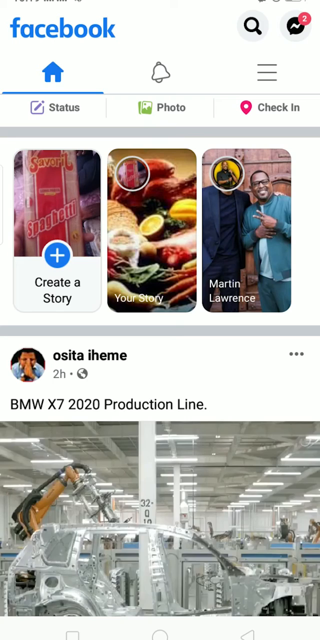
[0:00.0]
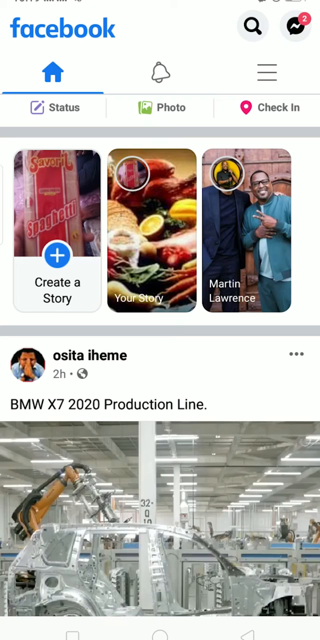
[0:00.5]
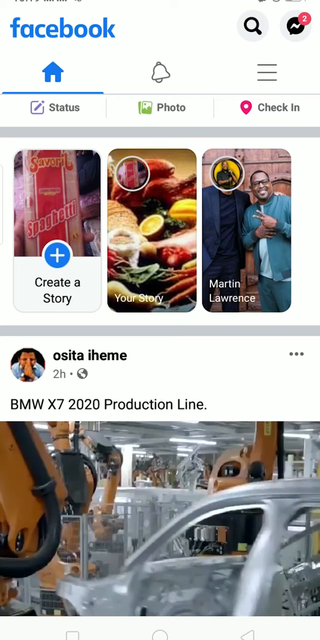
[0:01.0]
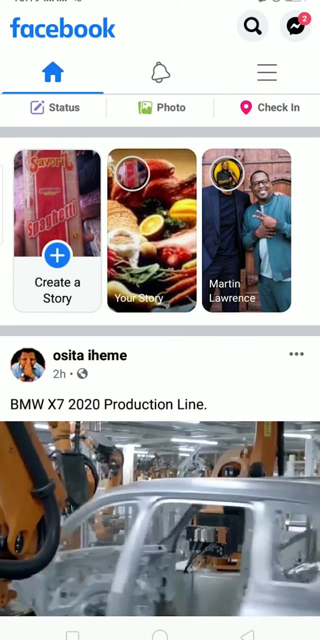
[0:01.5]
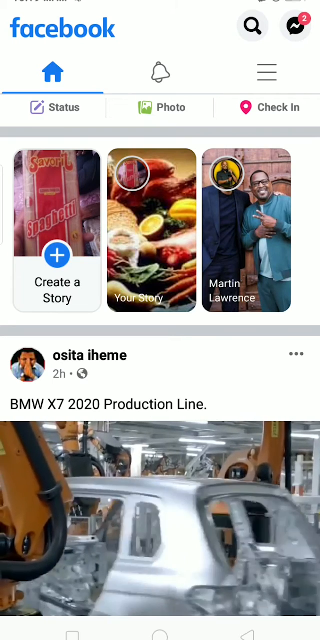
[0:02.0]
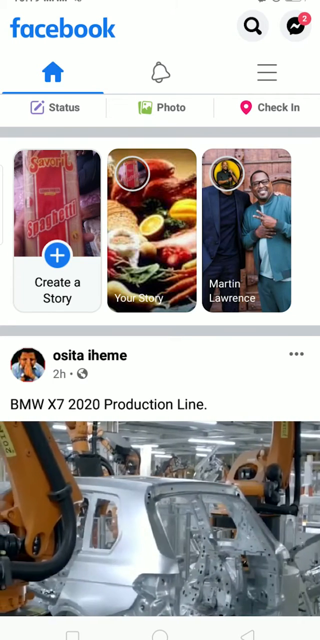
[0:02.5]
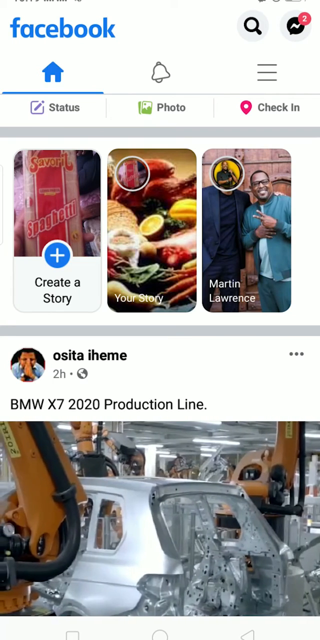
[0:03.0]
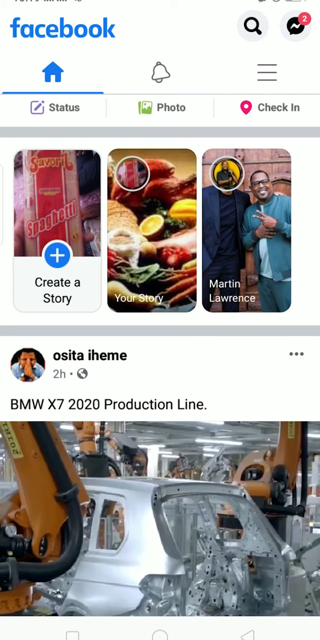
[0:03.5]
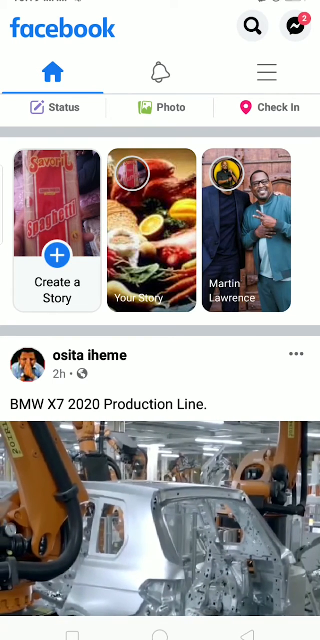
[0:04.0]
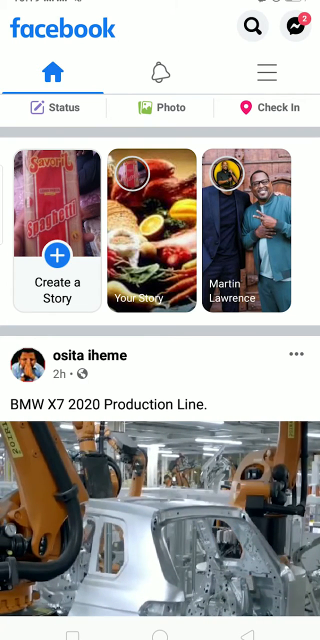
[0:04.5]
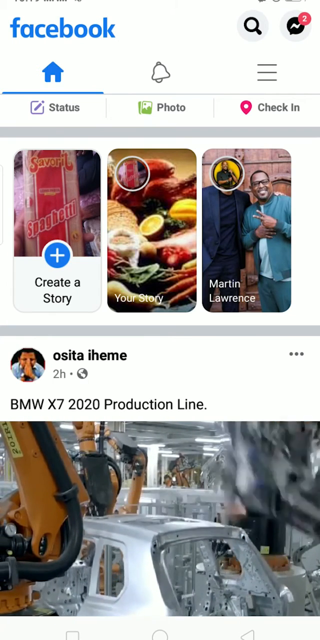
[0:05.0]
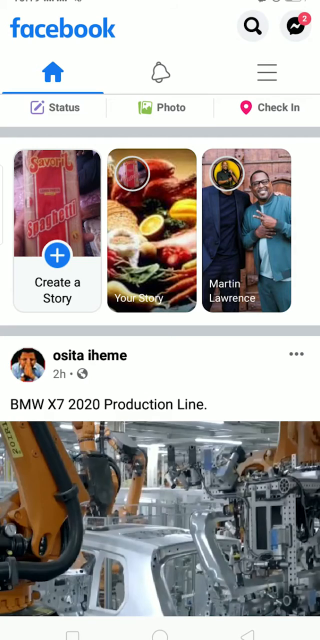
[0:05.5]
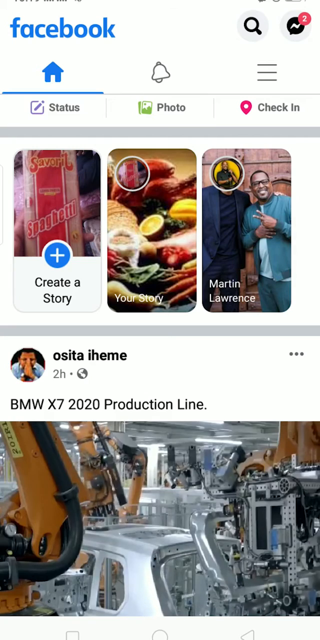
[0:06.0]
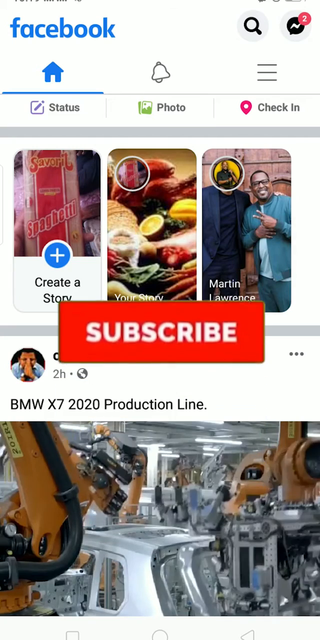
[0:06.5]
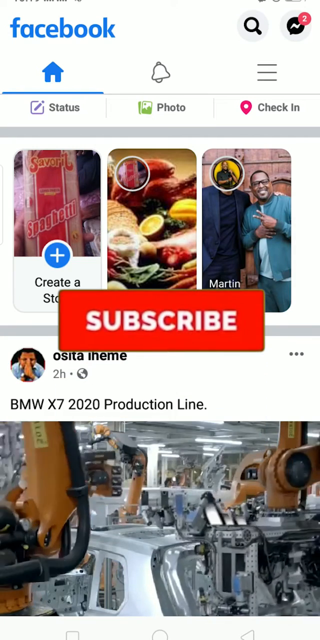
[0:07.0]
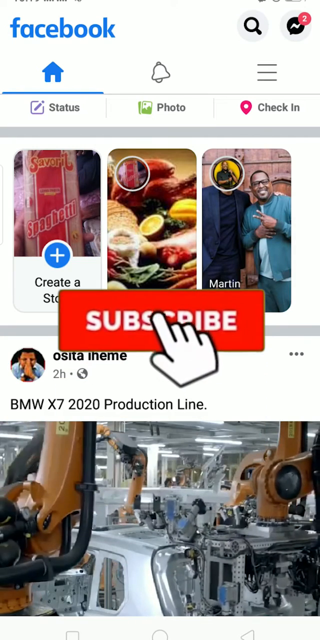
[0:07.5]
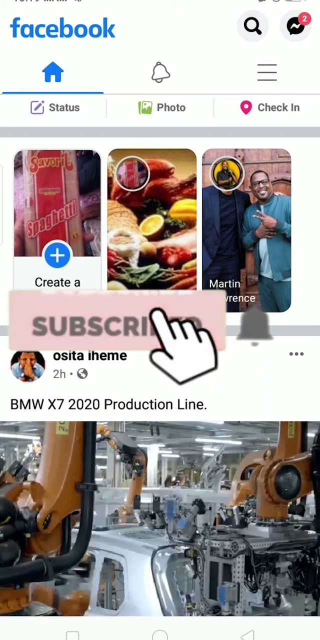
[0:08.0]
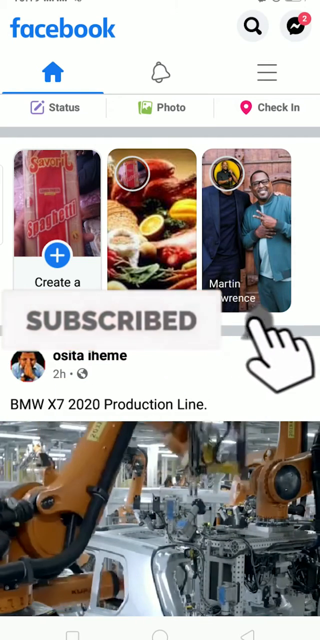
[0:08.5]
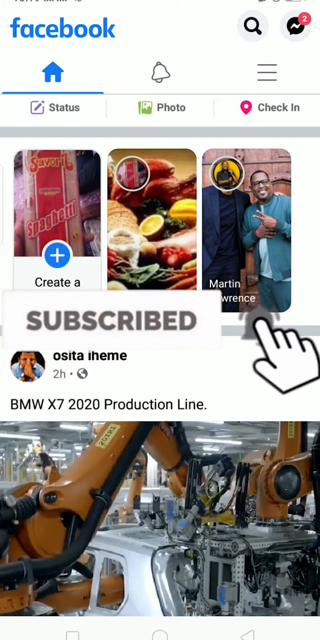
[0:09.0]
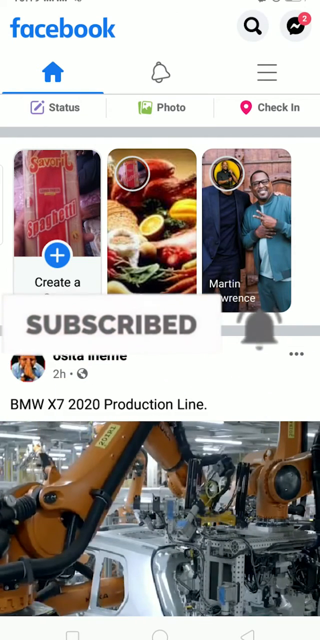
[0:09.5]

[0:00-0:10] A silver outline of a car's metal frame pulls up with orange machinery on three sides of it, and another one comes down from the back side. These robots start working on the car, adding items. Toward the end, a pop-up at the top says "subscribe," and a floating hand comes in from the bottom, clicks it and turns it white, then clicks the little gray bell notification icon.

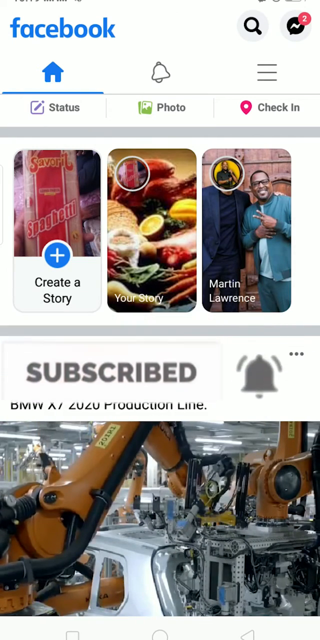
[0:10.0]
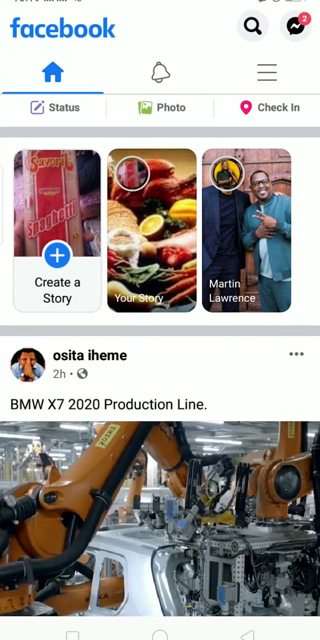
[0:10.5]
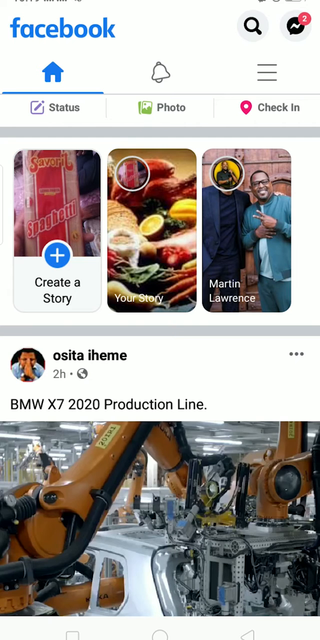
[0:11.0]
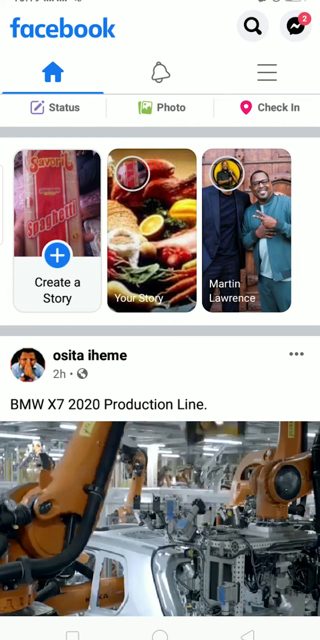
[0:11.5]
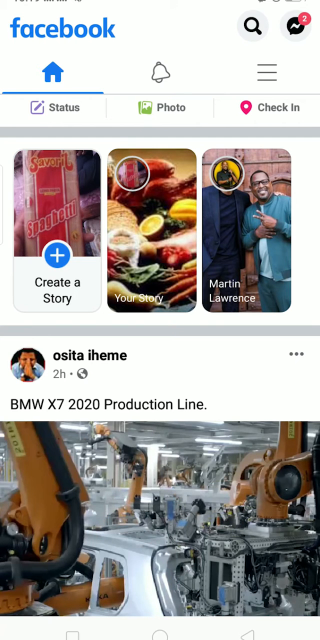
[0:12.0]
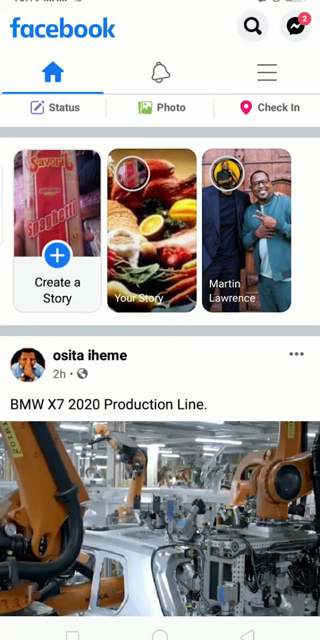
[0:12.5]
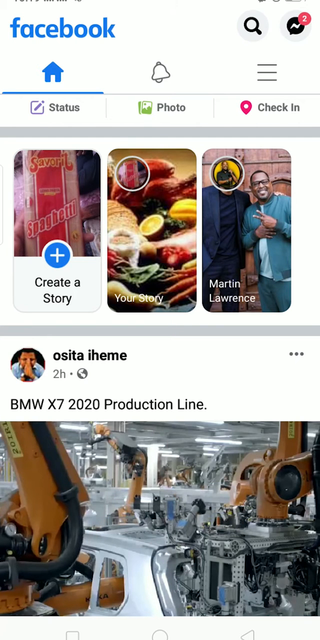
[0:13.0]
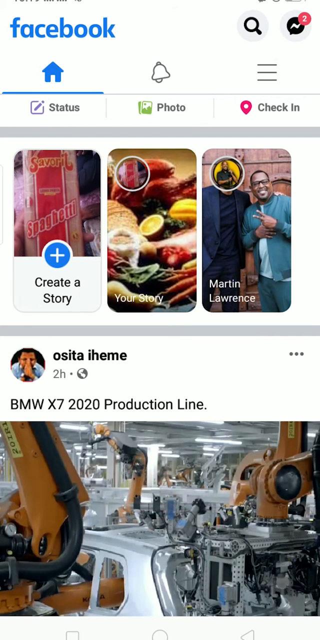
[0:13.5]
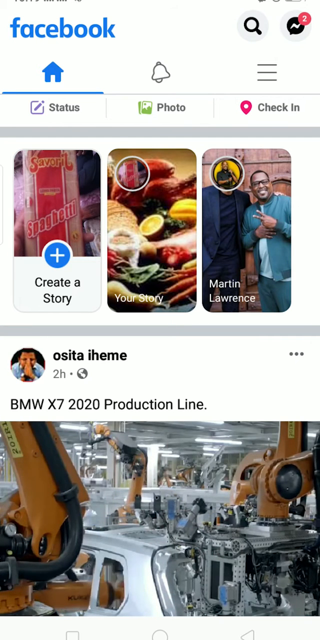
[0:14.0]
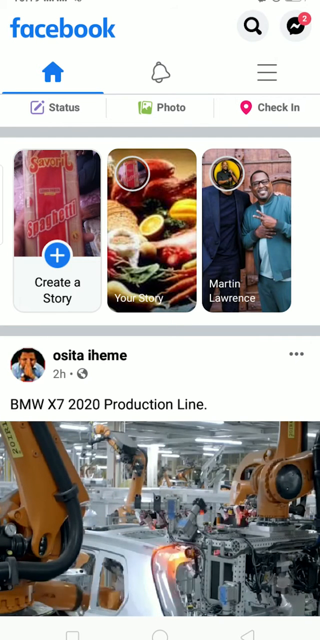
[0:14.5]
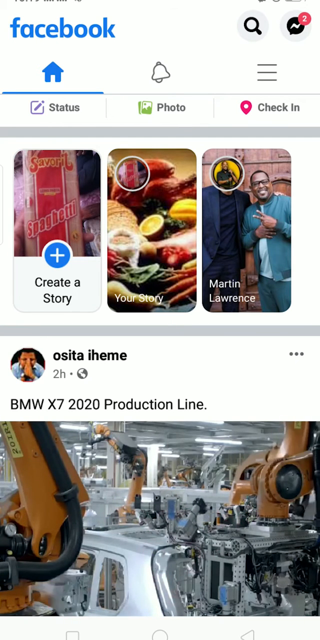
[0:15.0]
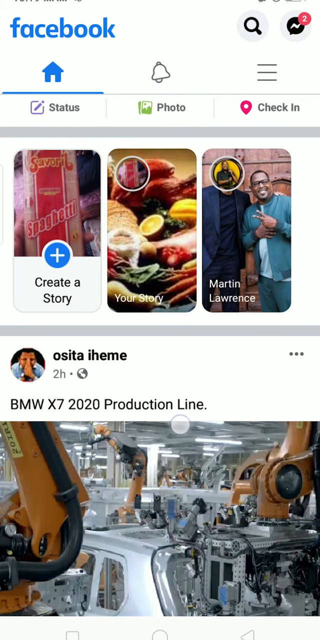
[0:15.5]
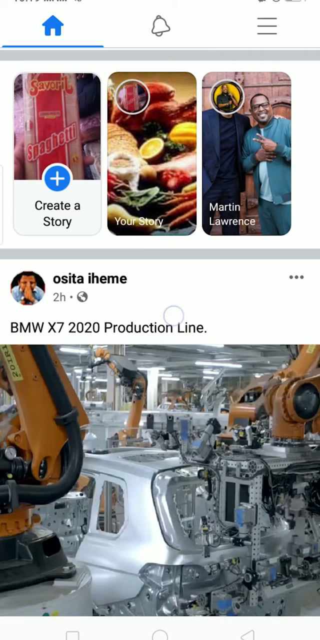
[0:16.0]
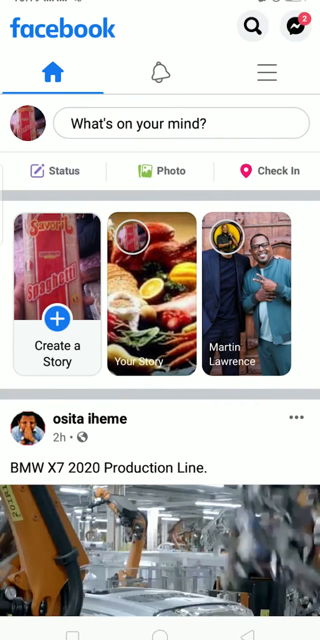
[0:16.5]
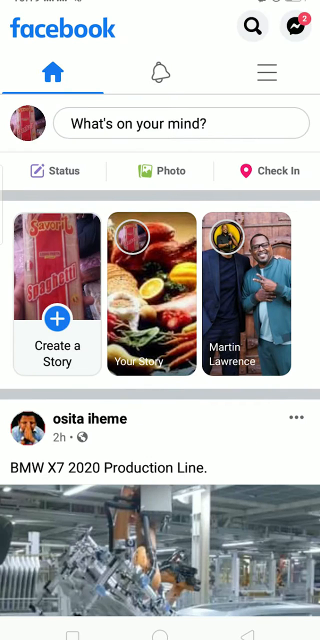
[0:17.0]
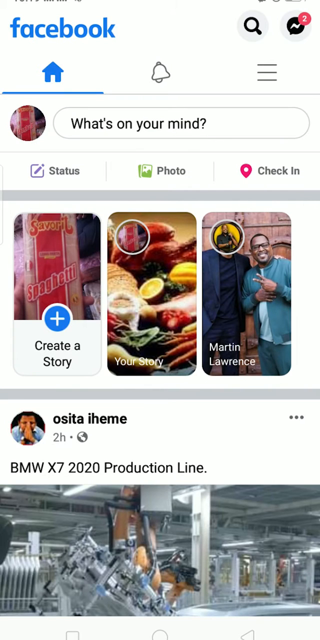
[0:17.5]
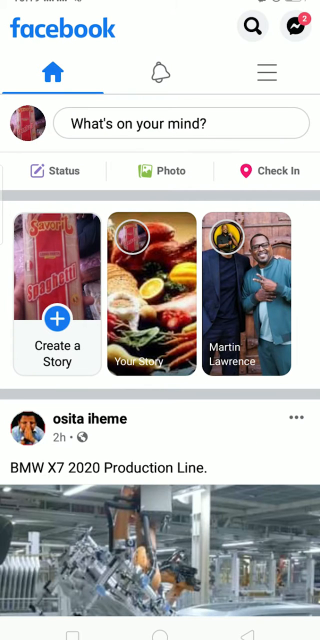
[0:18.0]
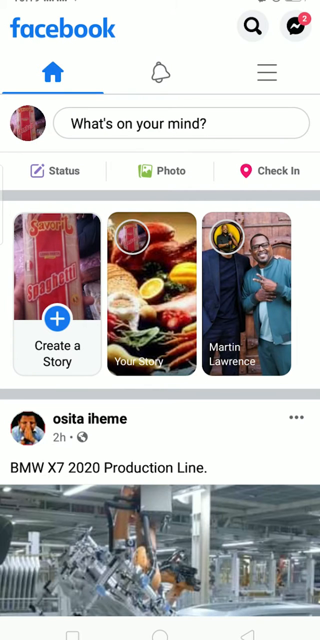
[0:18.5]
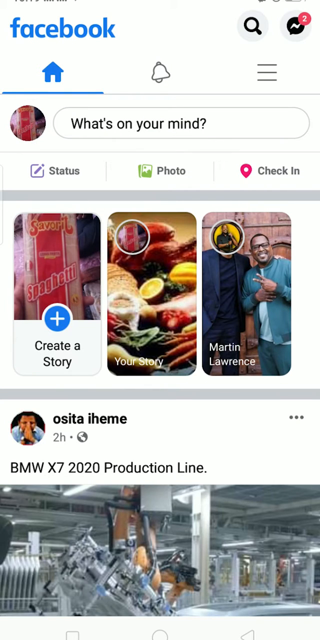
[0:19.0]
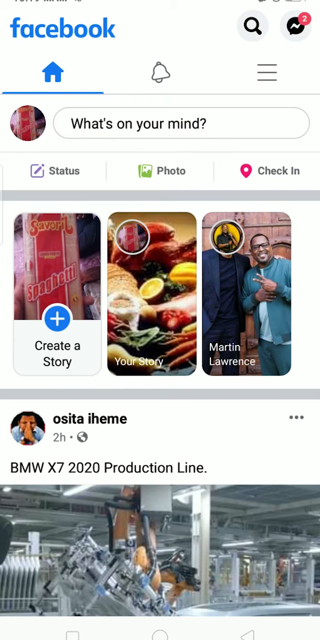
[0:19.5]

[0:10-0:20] The notification icon shoots down the video page, and the orange and black robots continue working on the car. Arc sparks come off where they are seemingly welding products they have placed into place. In the background, other robots appear to be working. Toward the very end, a little circular slider comes down from the top, and the video goes very big and then very small again.